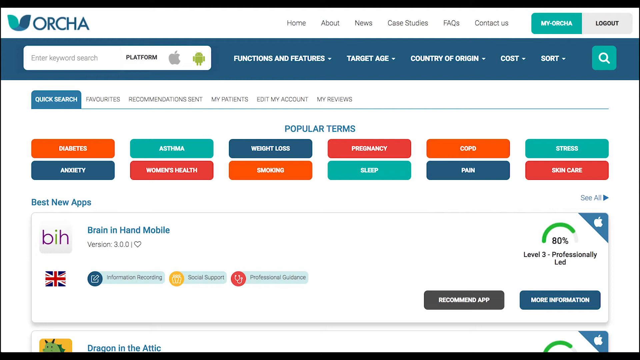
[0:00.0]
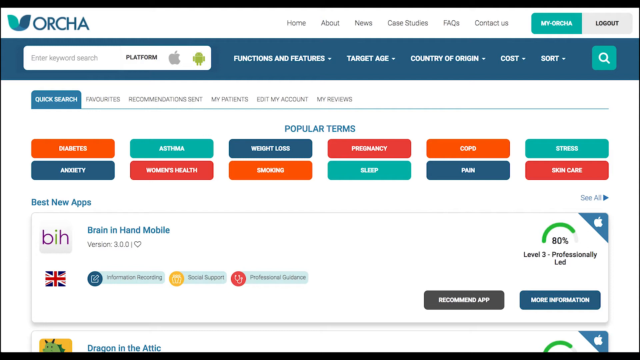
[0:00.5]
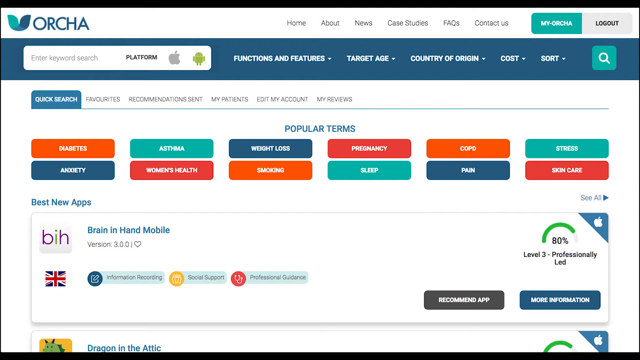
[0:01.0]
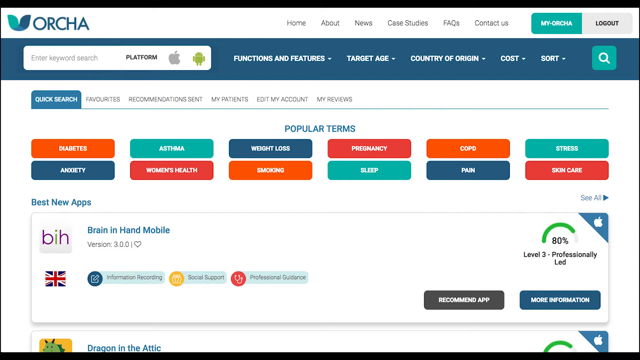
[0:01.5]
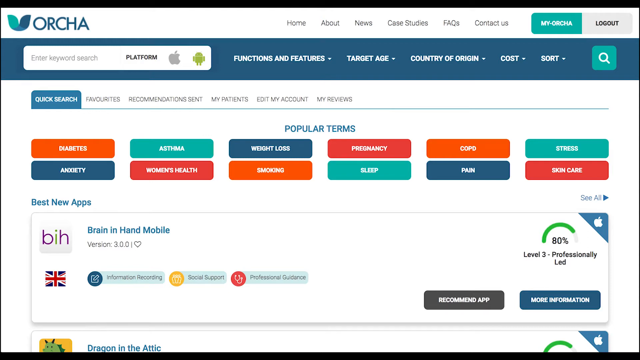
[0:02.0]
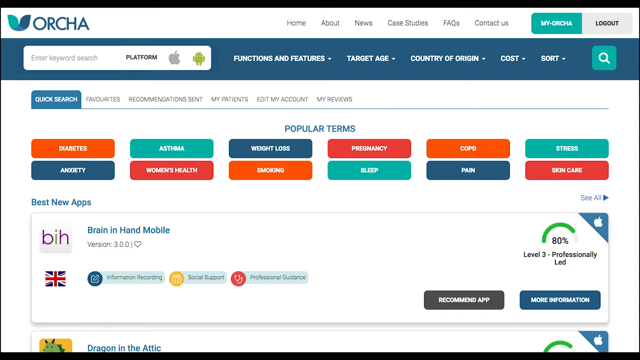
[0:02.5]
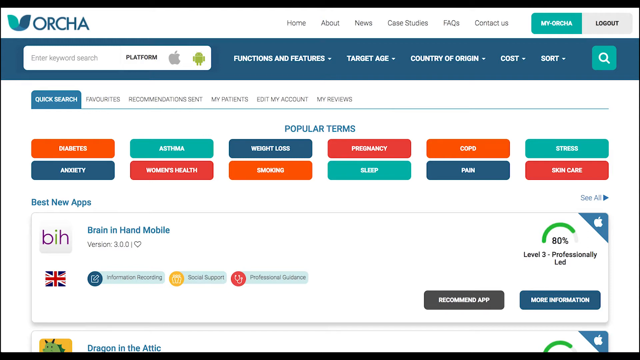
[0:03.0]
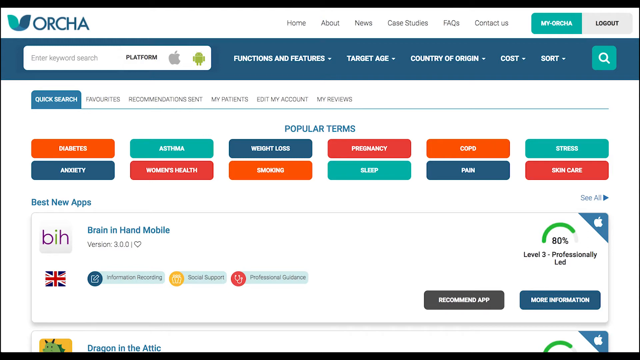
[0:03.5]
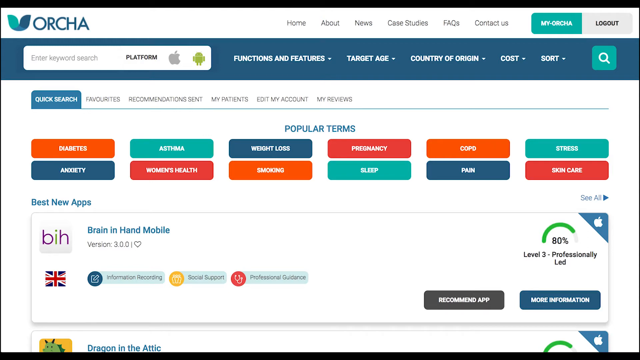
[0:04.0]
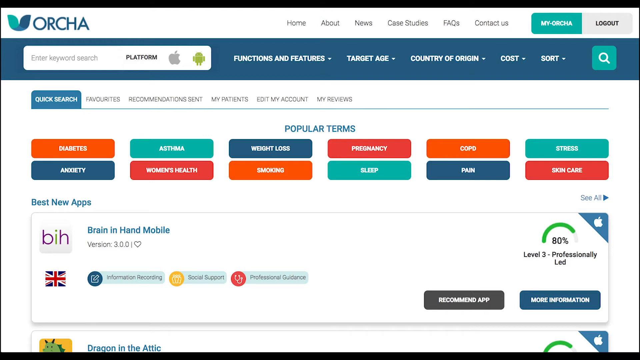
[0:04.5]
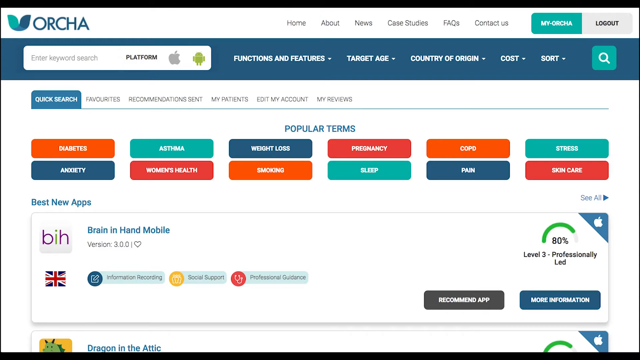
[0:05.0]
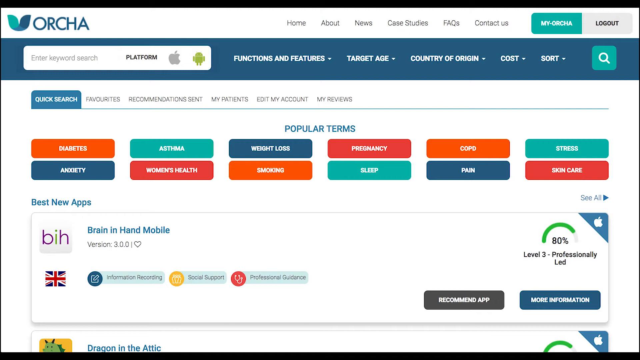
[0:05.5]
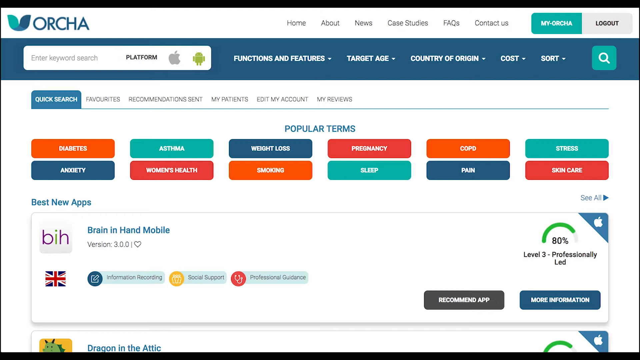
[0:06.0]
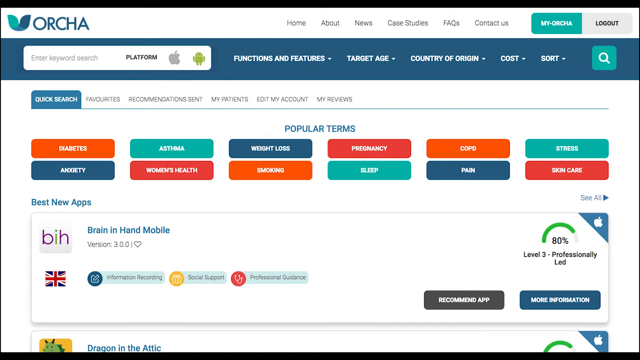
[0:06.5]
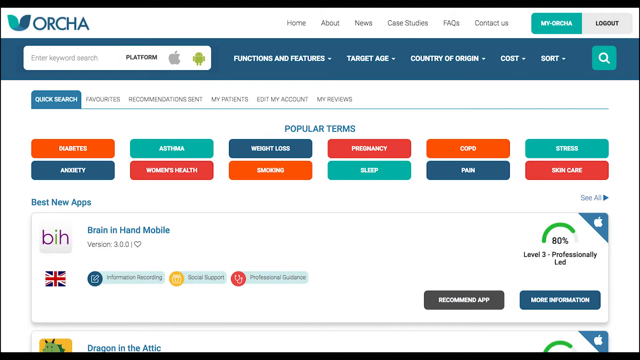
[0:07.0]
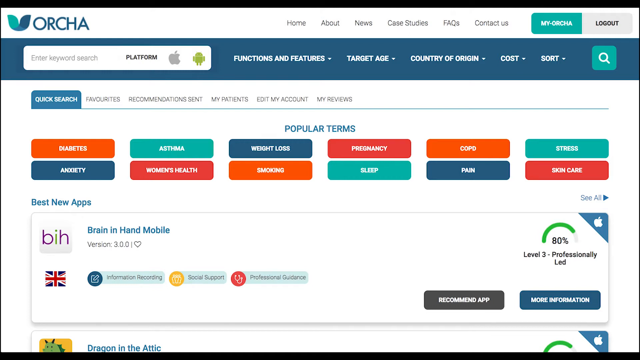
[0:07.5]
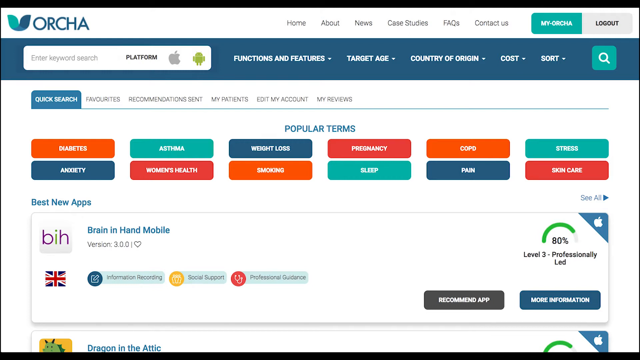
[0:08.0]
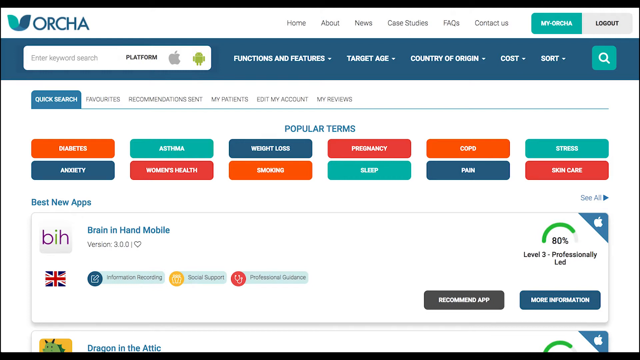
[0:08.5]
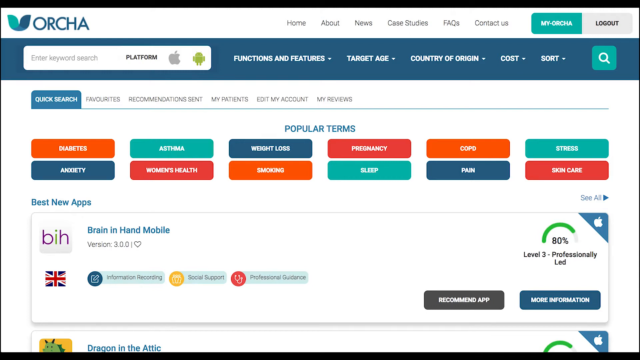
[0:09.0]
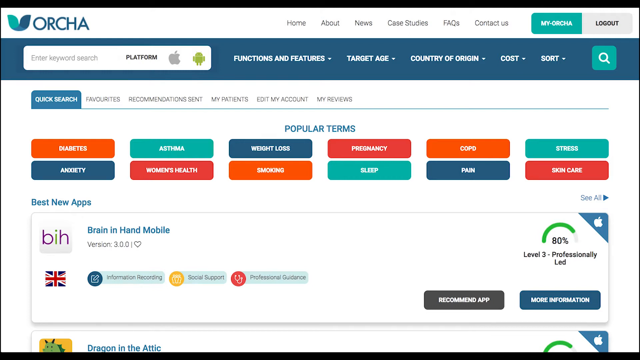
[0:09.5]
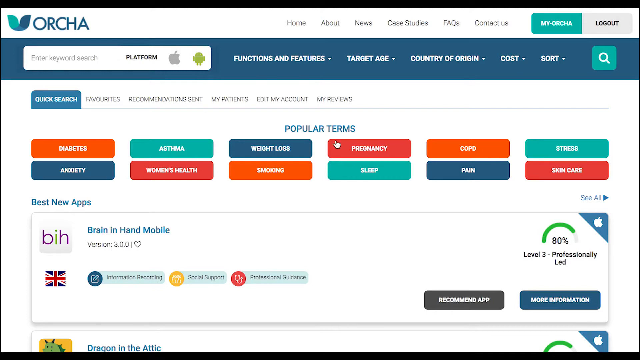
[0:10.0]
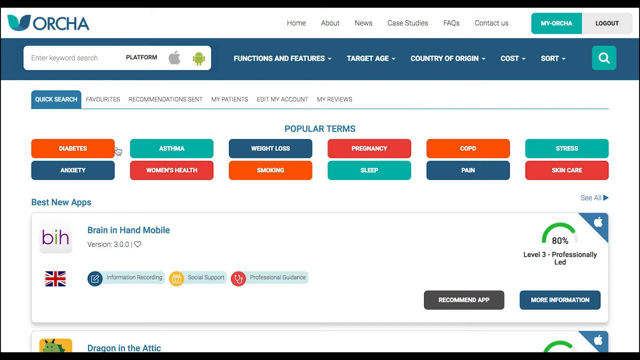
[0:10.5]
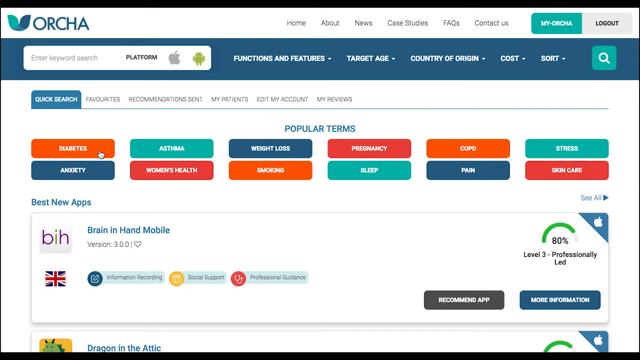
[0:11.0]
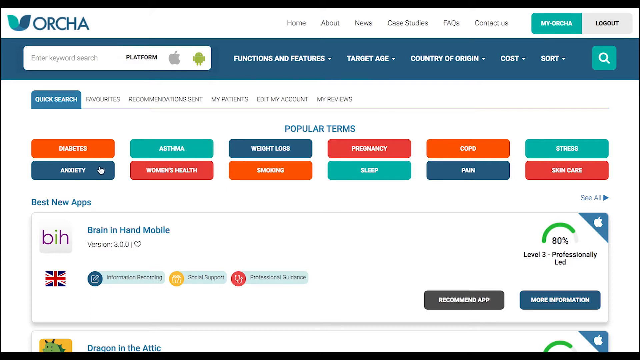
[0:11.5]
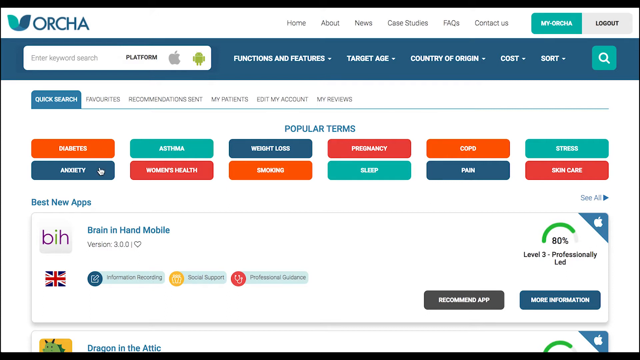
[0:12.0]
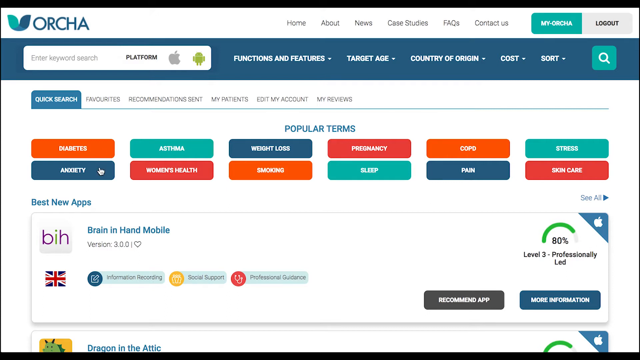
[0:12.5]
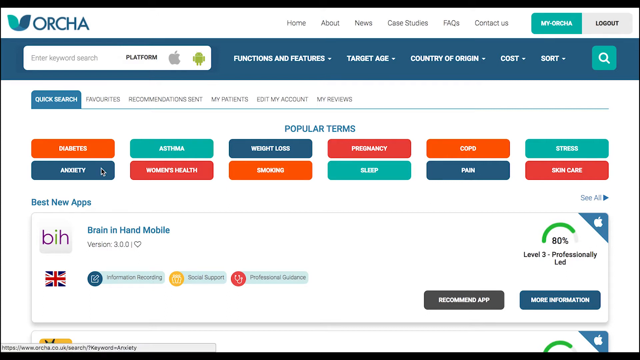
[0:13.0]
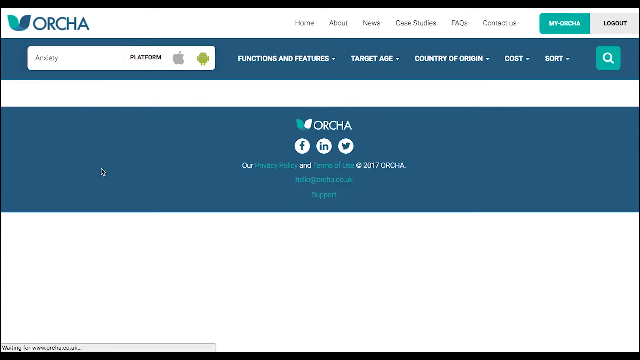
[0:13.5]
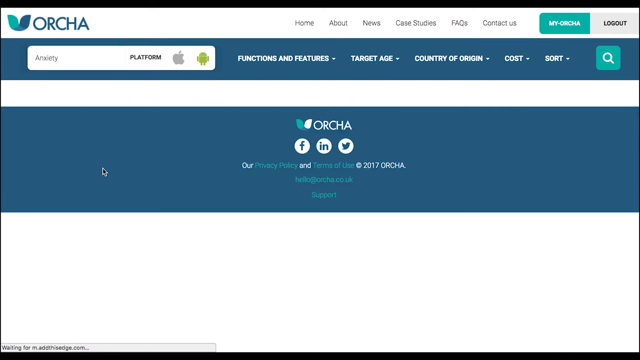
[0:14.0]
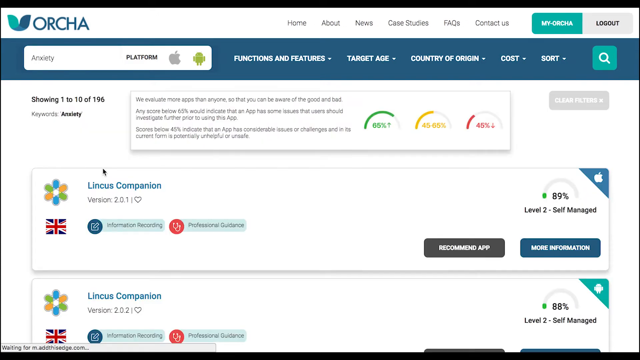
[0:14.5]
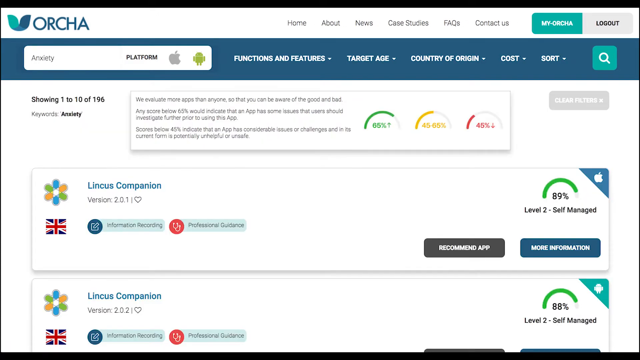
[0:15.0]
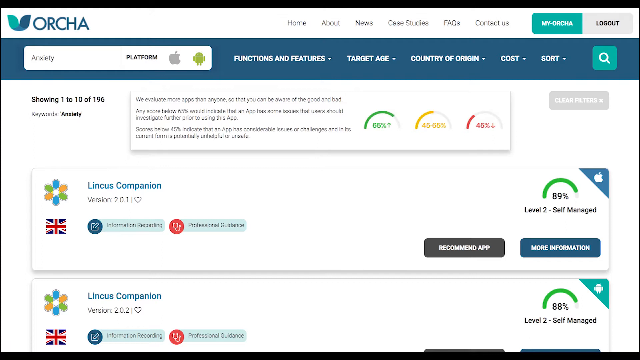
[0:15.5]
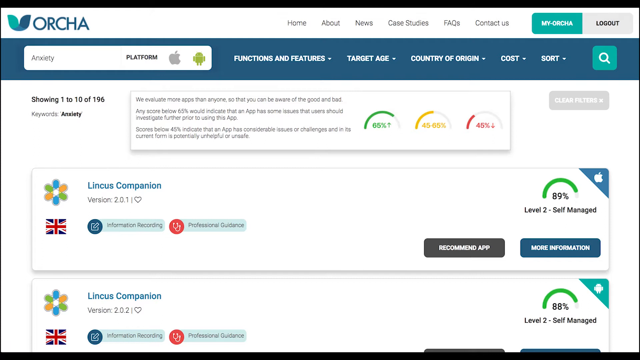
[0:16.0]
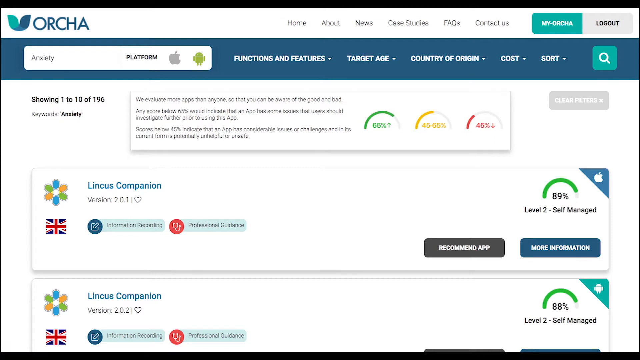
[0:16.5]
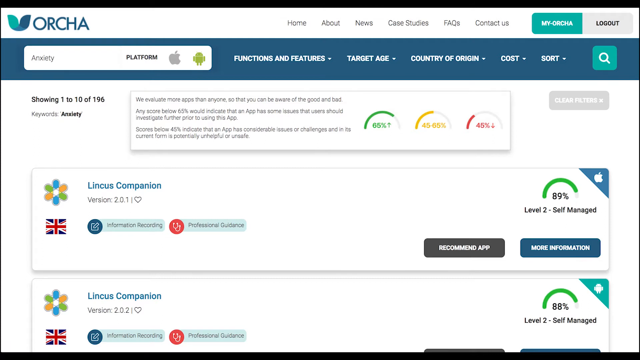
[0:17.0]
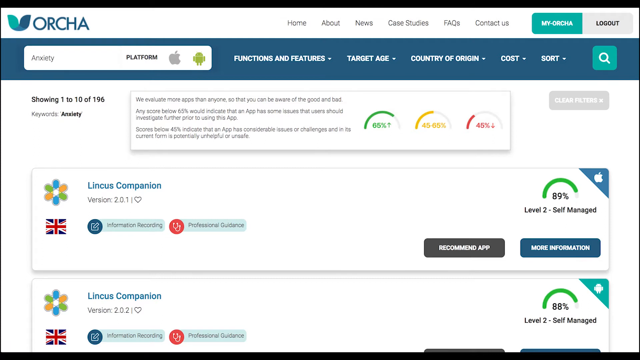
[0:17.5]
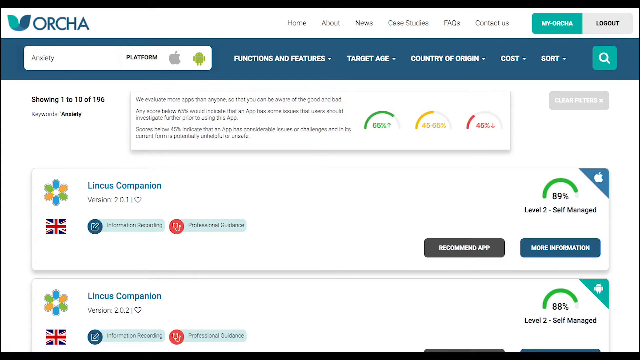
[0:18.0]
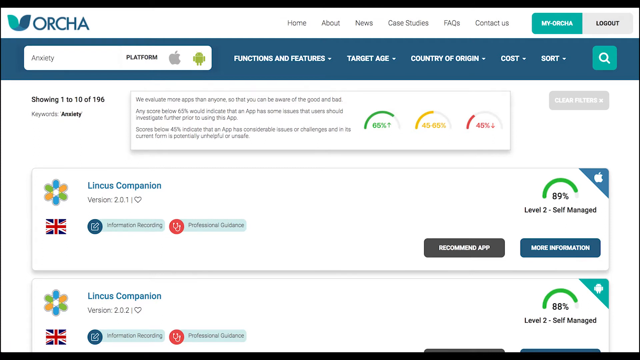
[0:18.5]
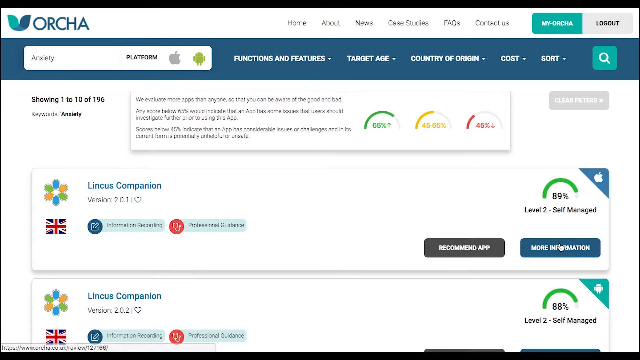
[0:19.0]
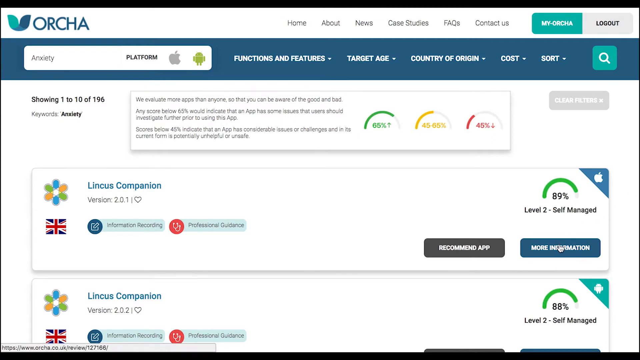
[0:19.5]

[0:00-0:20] A web browser is open, and in the top left the website's name, Orcha, is written in blue capital letters with a blue logo to its left. Along the top of the home page are several options: Home, About, News, Case Studies, Frequently Asked Questions and a Contact Us portal. The person is logged in, as a button at the top reads "My Orcha" alongside an option to log out. It looks to be a health care platform: further down the page is a list of popular terms including diabetes, asthma, weight loss, pregnancy, COPD, pain, sleep, smoking and anxiety. Someone moves the mouse and selects anxiety from the list. The next page appears to compile a list of apps that can be helpful for anxiety, and the first one on the list is called Lincus Companion. The person clicks on more information, which brings up another page.